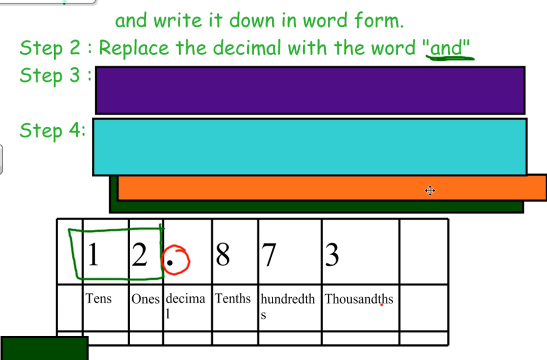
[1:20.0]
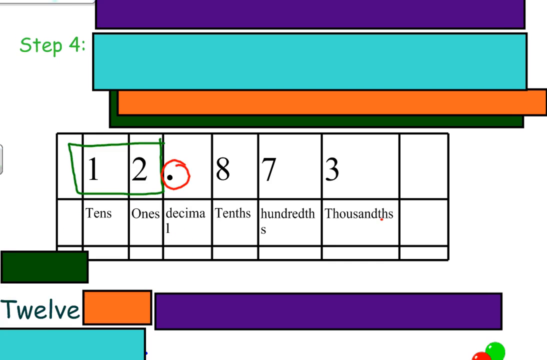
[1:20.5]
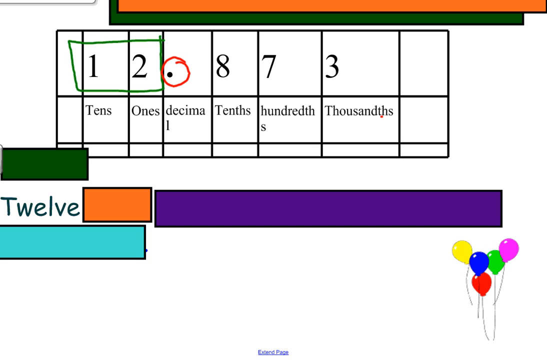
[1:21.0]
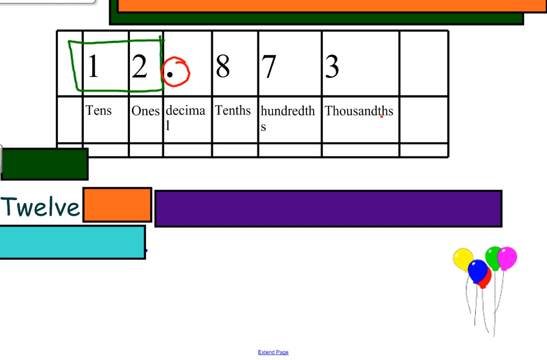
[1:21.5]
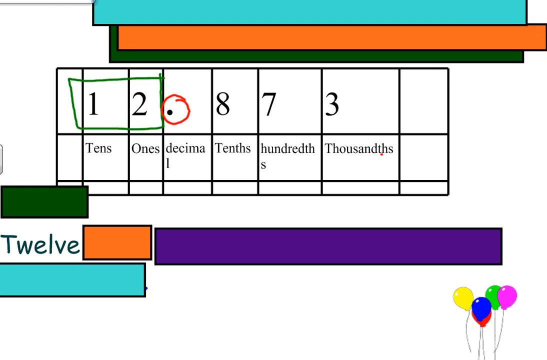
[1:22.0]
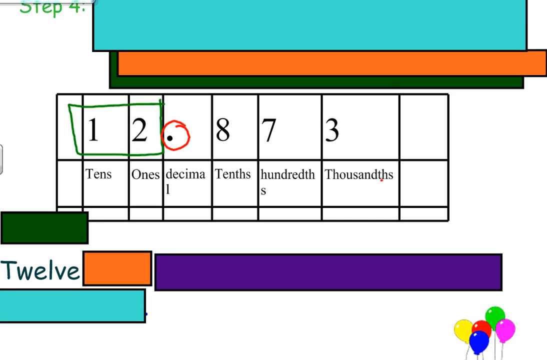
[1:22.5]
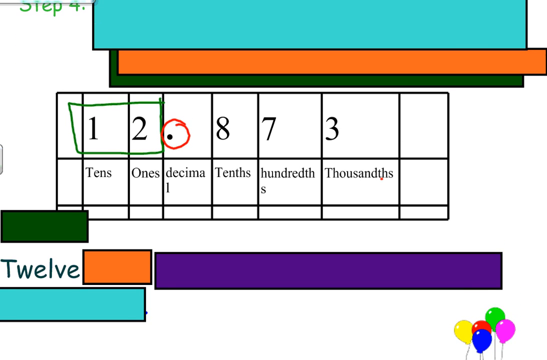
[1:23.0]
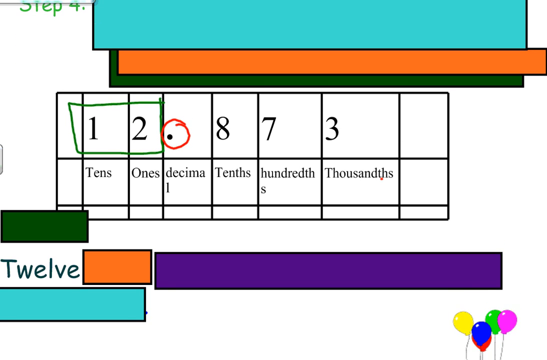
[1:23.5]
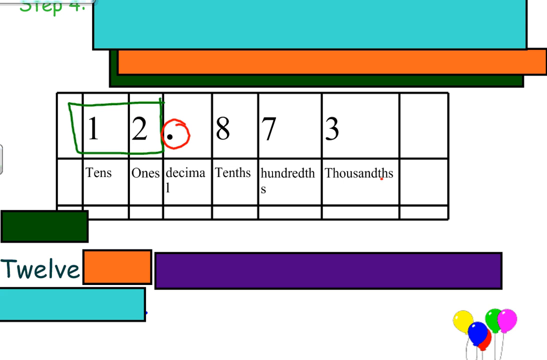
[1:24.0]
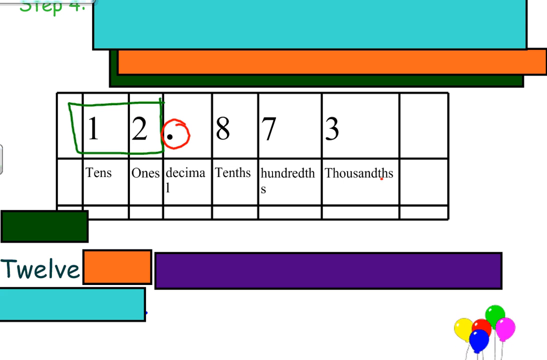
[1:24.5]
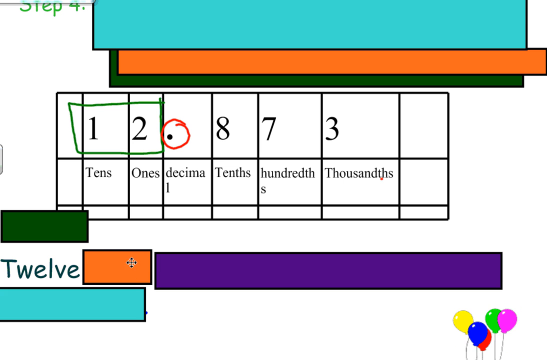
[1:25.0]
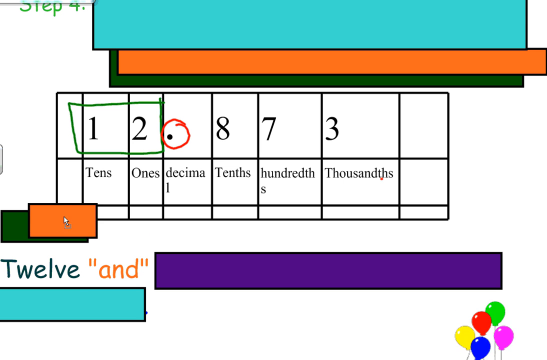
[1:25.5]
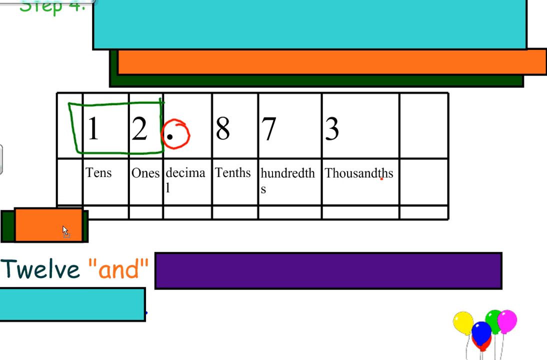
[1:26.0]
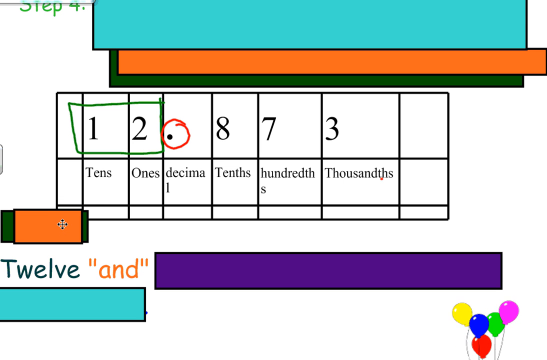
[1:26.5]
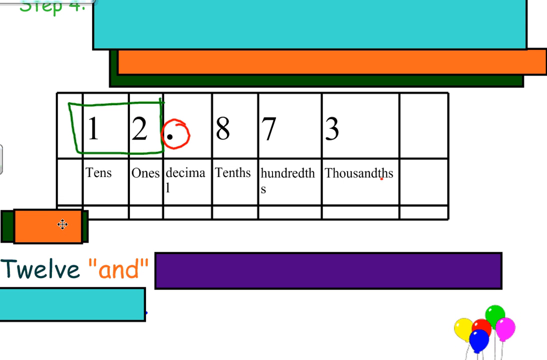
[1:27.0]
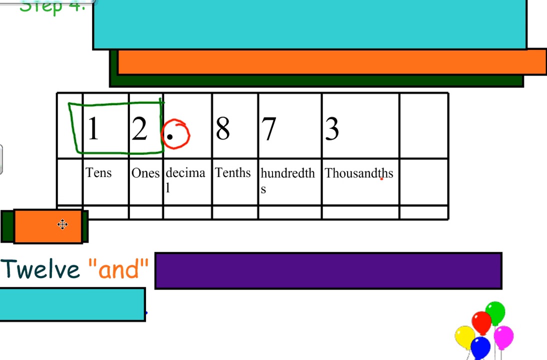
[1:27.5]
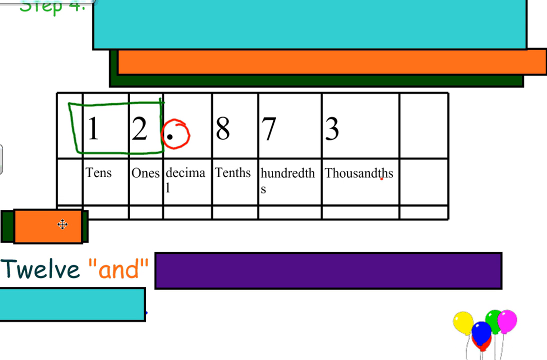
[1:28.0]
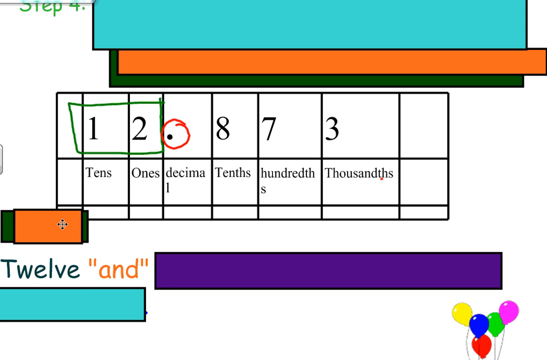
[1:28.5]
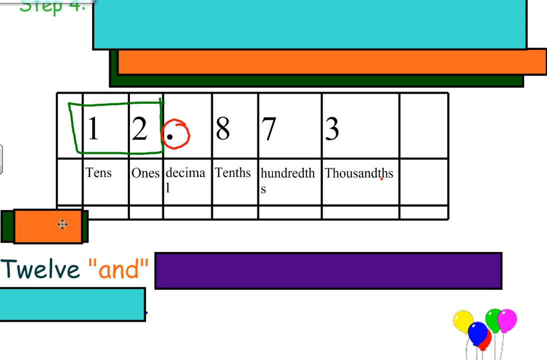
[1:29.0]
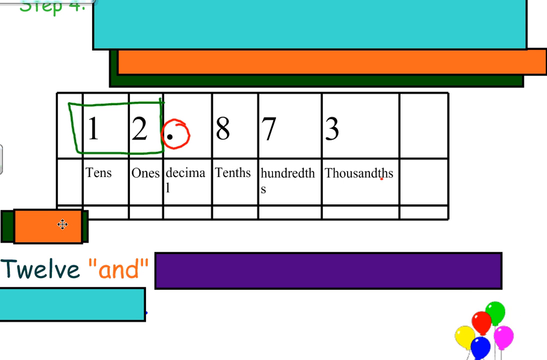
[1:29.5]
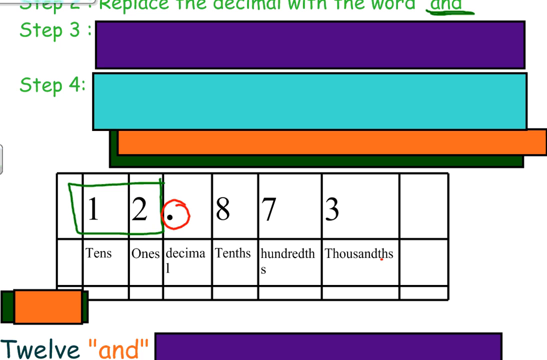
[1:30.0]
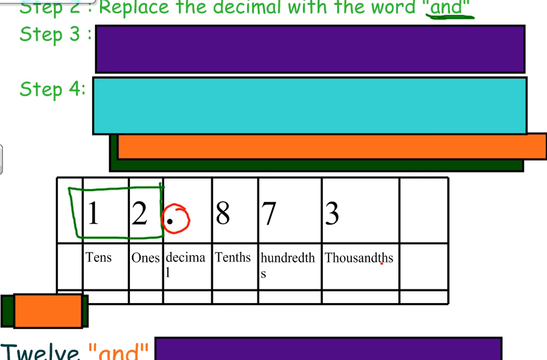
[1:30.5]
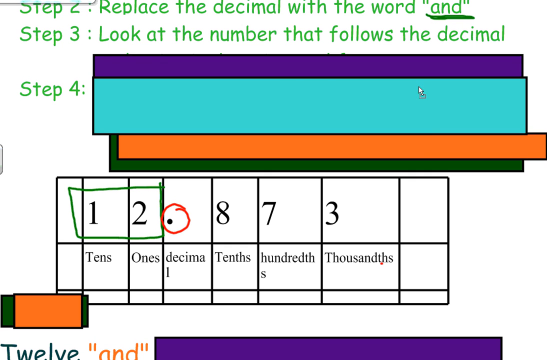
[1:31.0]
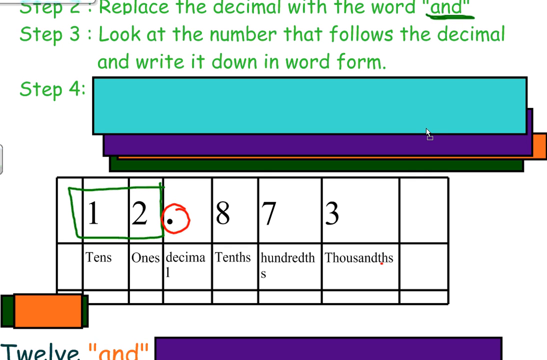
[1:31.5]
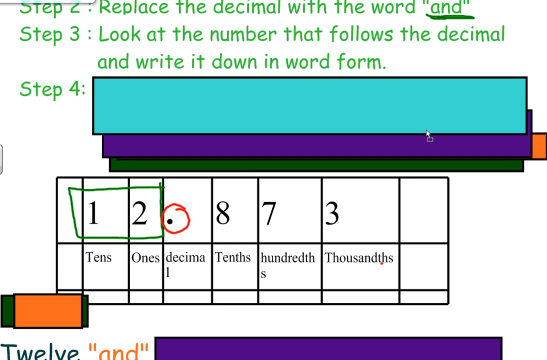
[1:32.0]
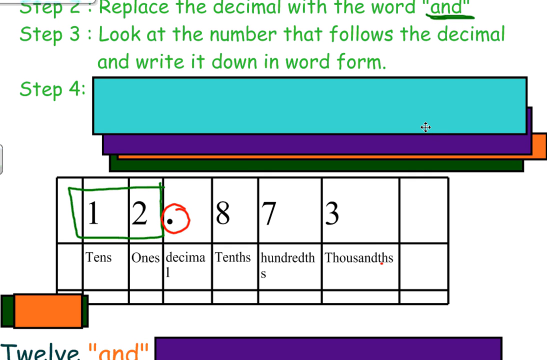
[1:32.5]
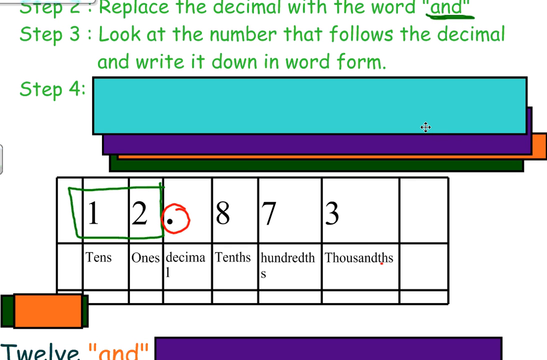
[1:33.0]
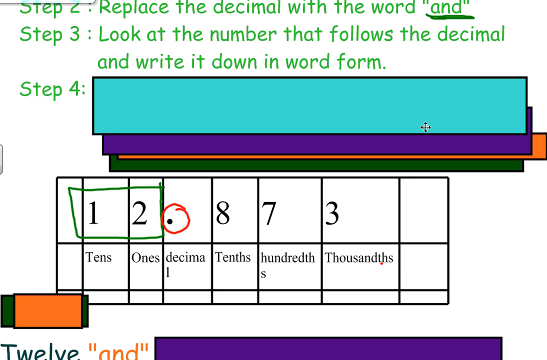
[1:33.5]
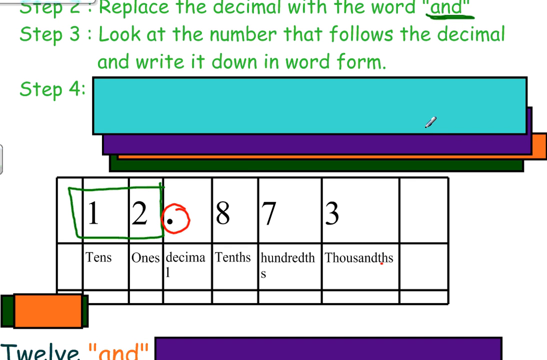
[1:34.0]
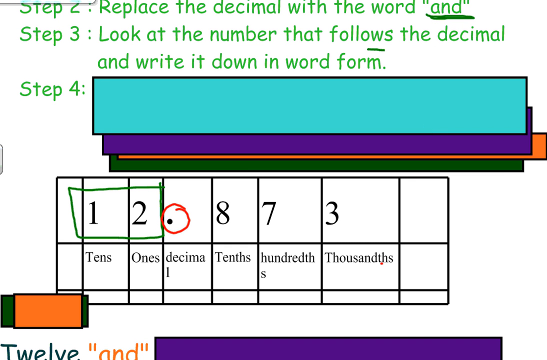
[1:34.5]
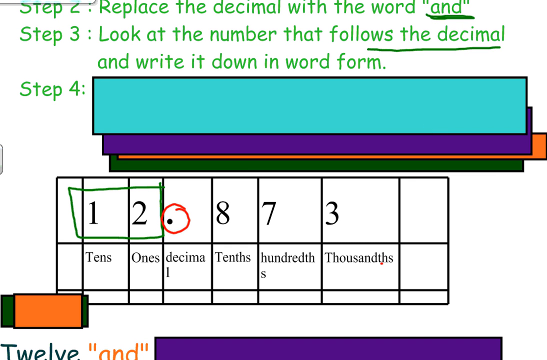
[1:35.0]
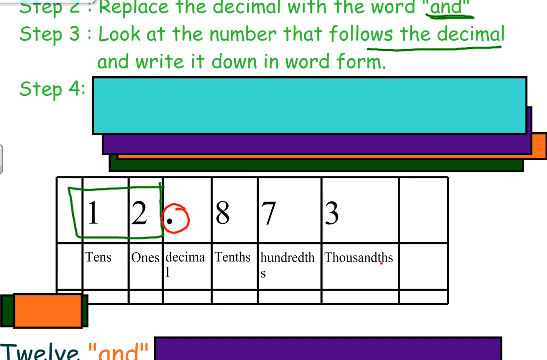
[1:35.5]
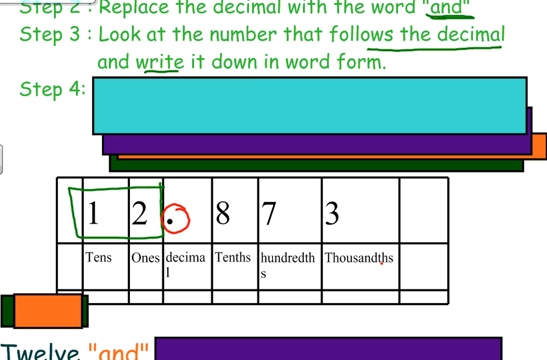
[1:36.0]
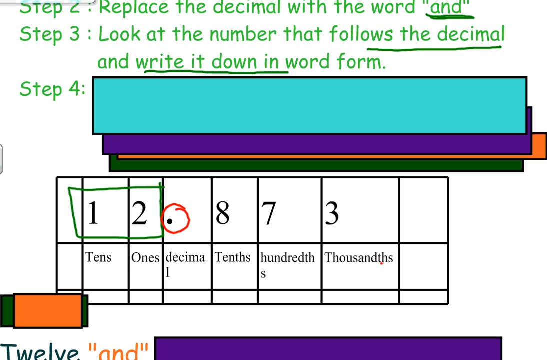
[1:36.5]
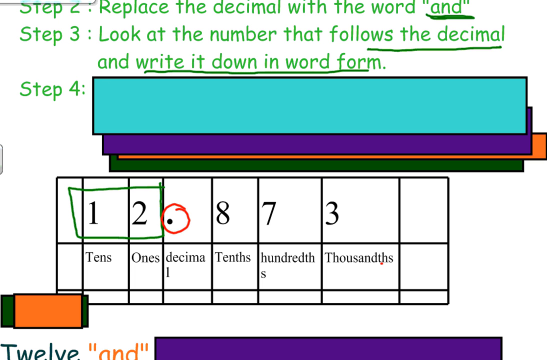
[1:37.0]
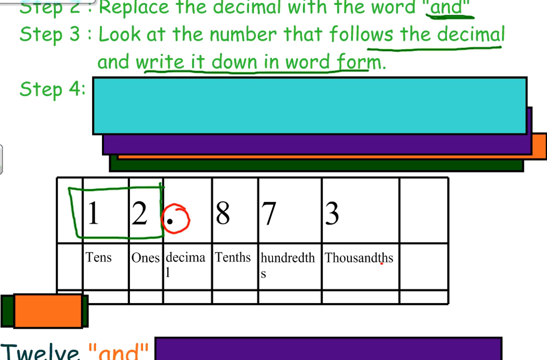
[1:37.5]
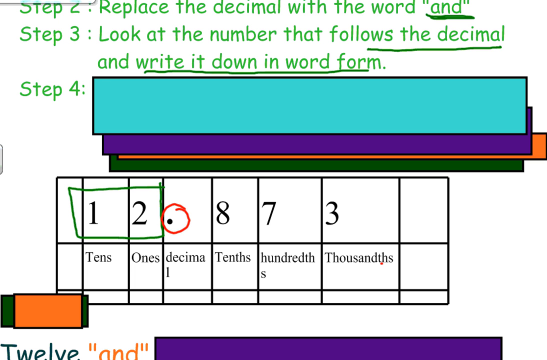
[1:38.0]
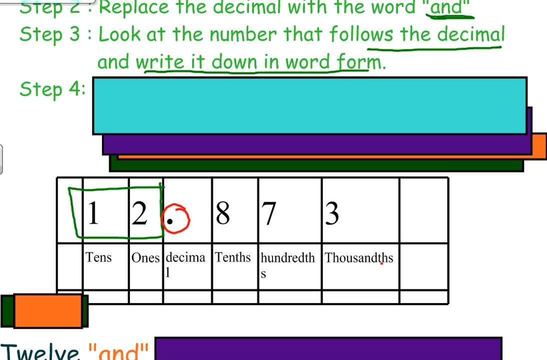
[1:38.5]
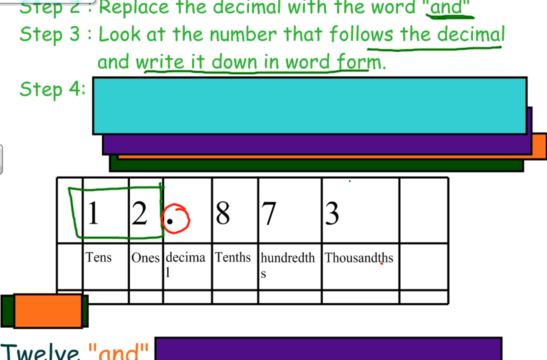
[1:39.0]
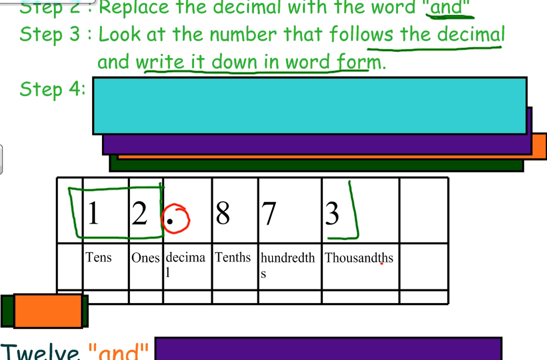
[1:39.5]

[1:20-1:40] Step 2 continues with the number 12, and the decimal is replaced with "and". Step 3 follows: take the number after the decimal and write it down in words.